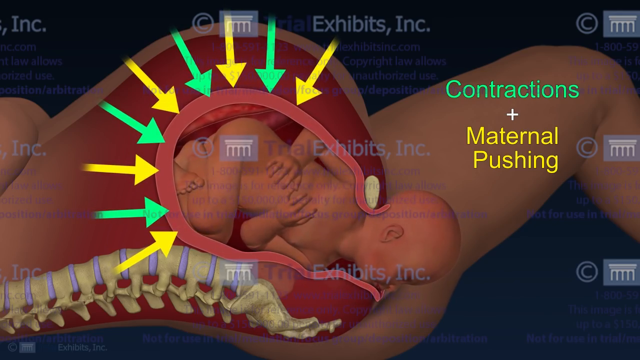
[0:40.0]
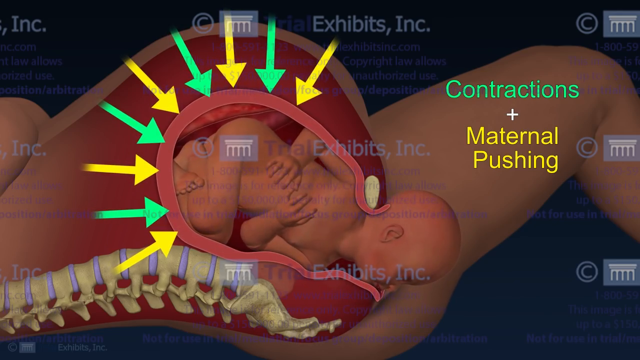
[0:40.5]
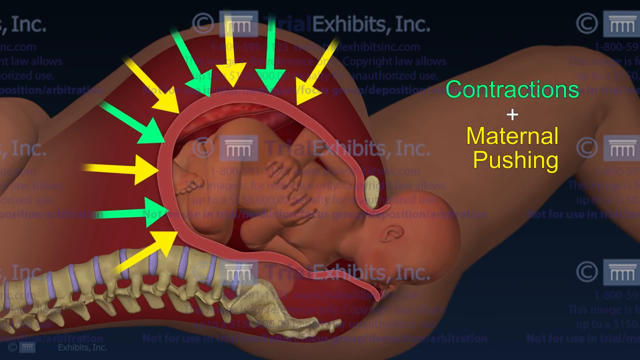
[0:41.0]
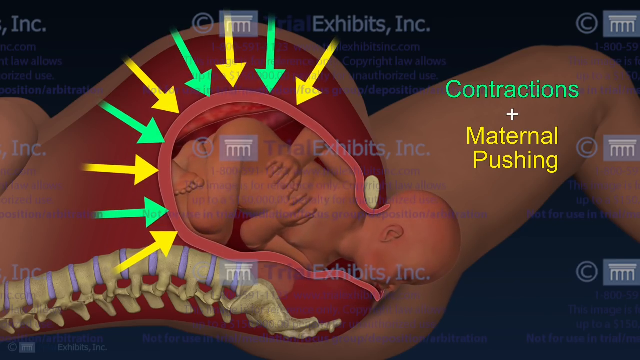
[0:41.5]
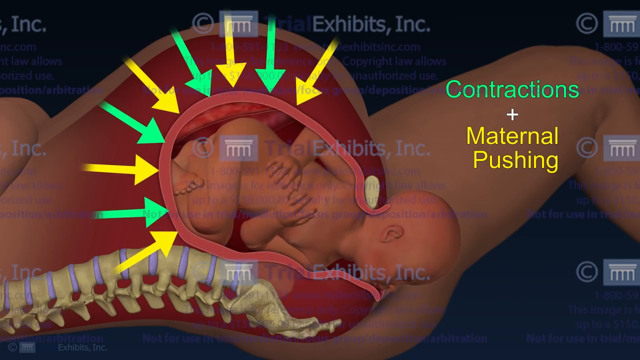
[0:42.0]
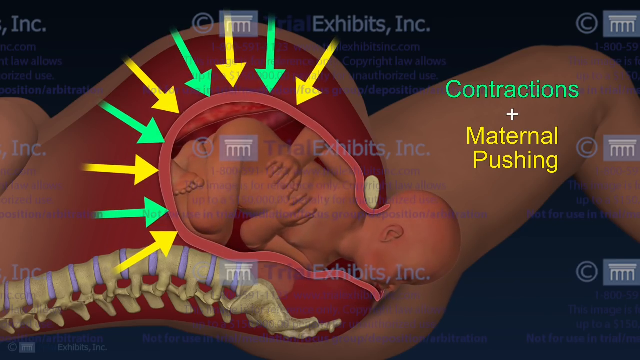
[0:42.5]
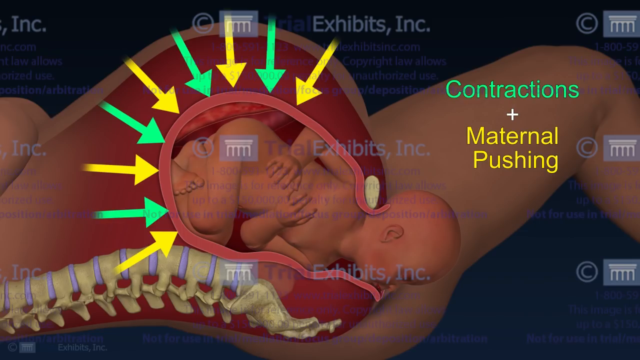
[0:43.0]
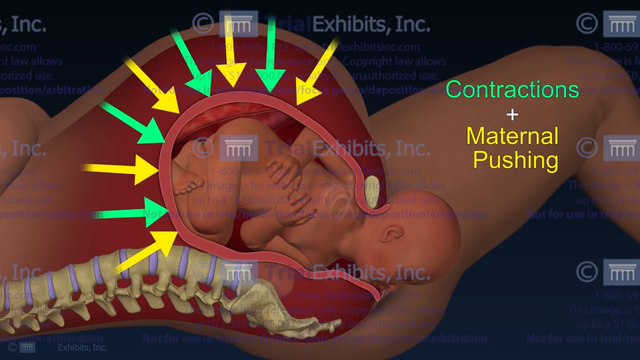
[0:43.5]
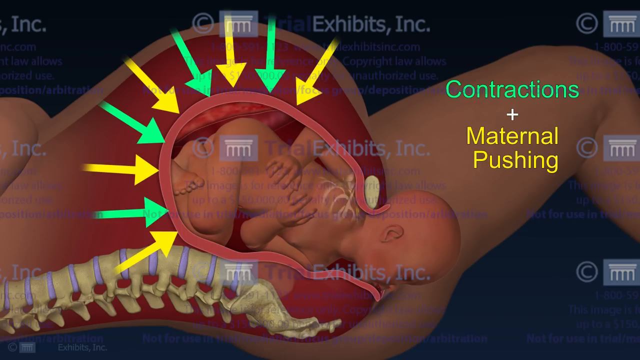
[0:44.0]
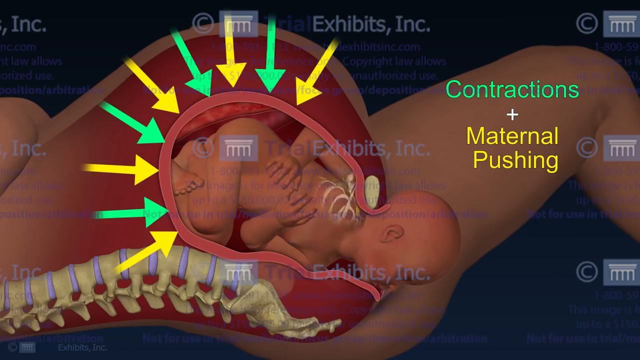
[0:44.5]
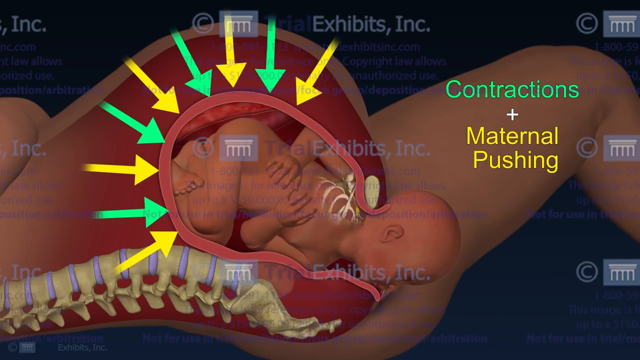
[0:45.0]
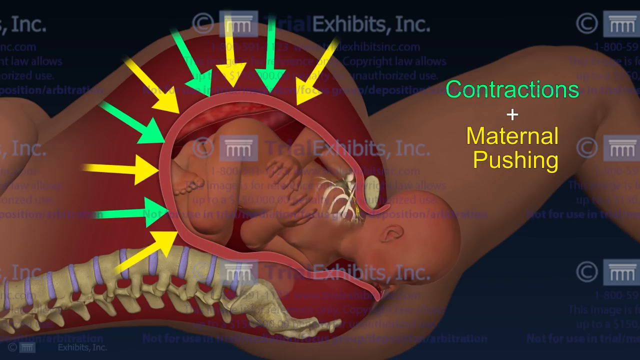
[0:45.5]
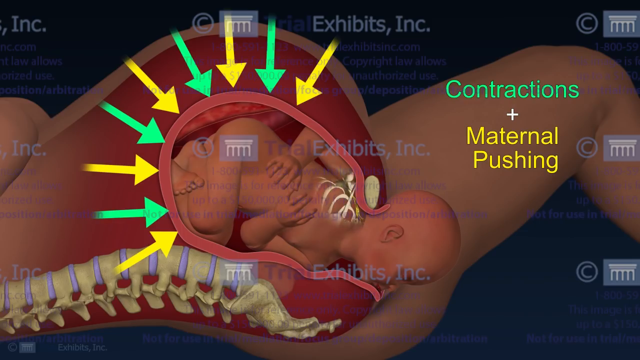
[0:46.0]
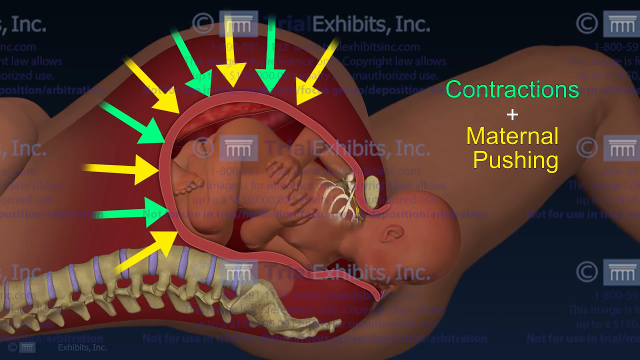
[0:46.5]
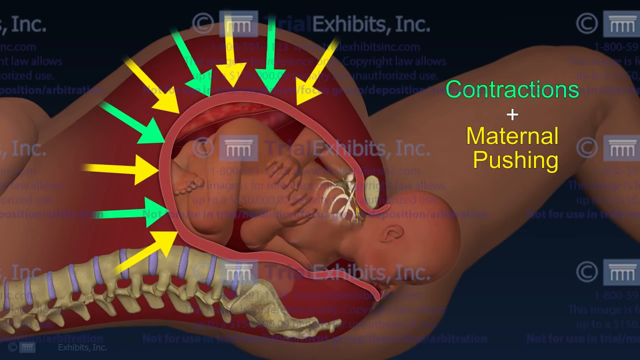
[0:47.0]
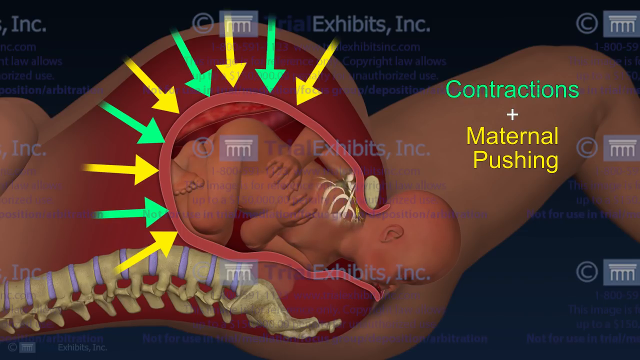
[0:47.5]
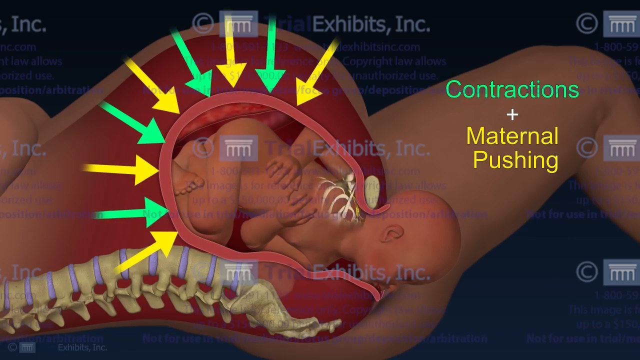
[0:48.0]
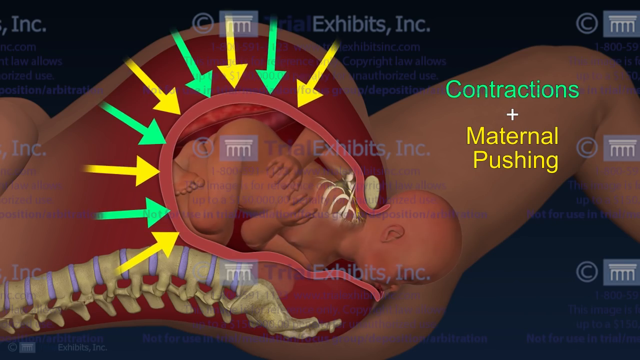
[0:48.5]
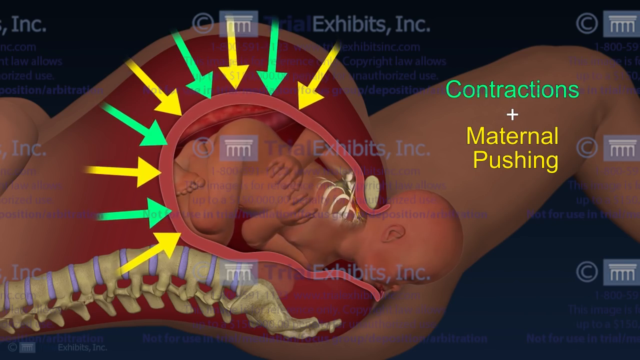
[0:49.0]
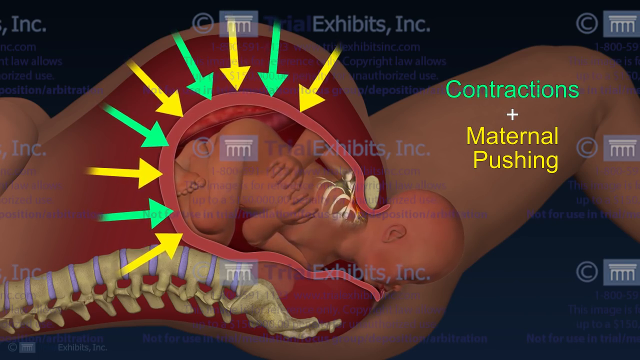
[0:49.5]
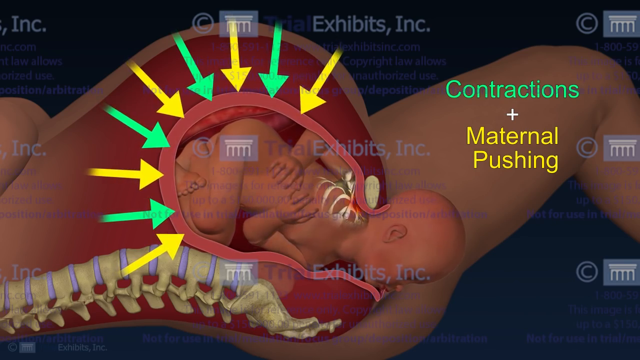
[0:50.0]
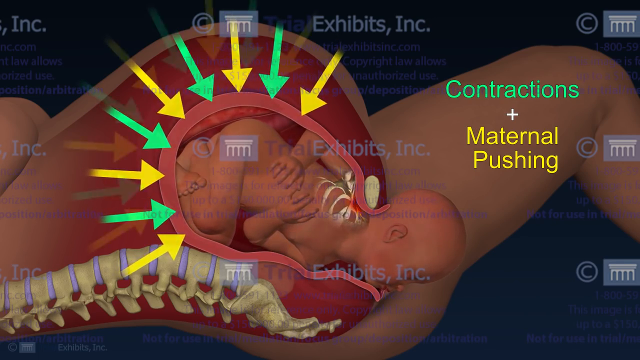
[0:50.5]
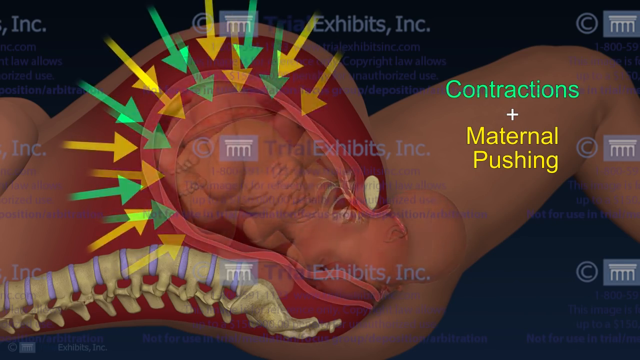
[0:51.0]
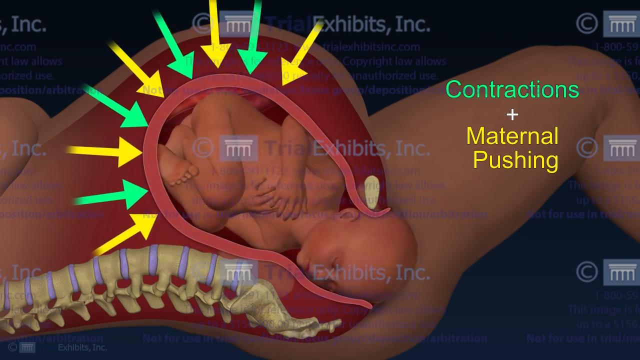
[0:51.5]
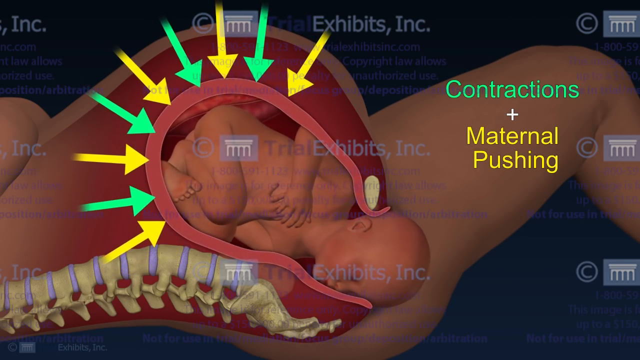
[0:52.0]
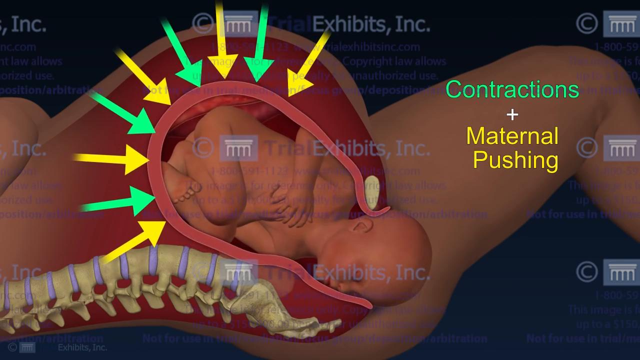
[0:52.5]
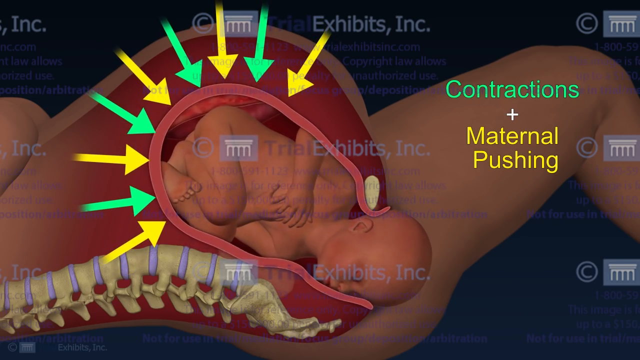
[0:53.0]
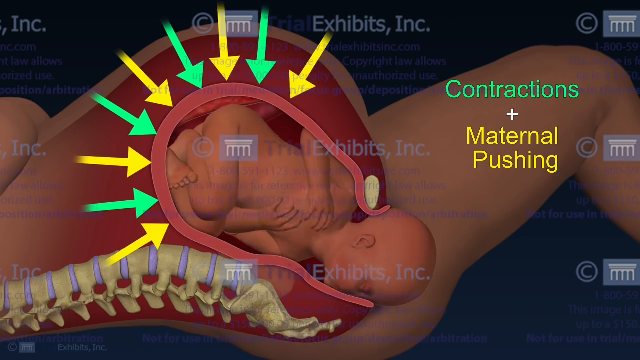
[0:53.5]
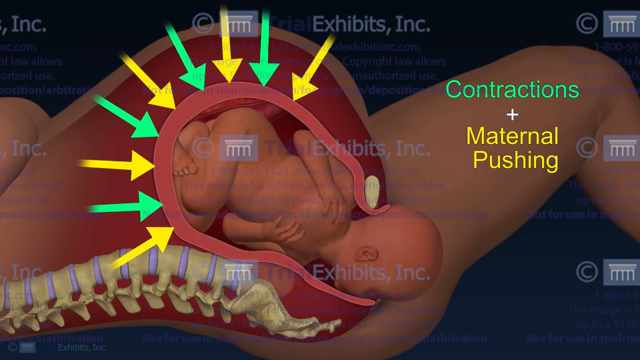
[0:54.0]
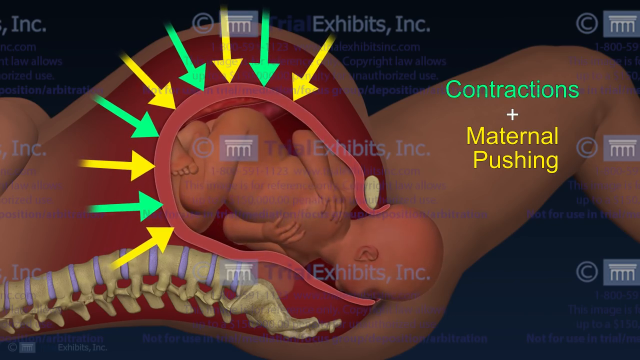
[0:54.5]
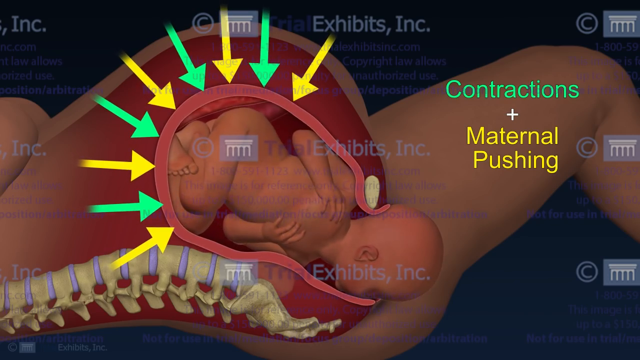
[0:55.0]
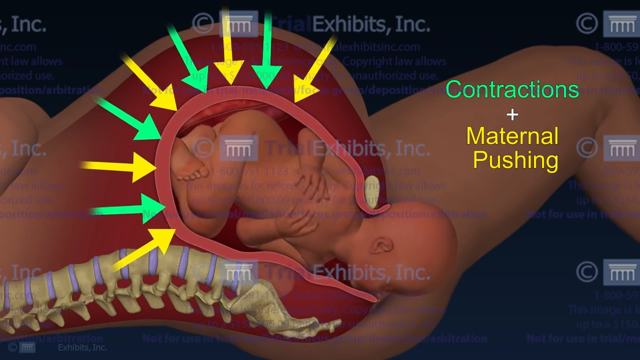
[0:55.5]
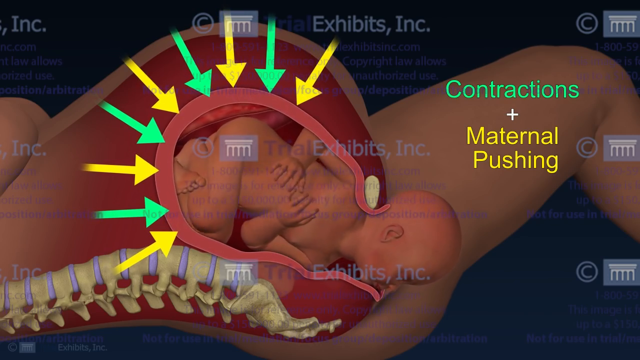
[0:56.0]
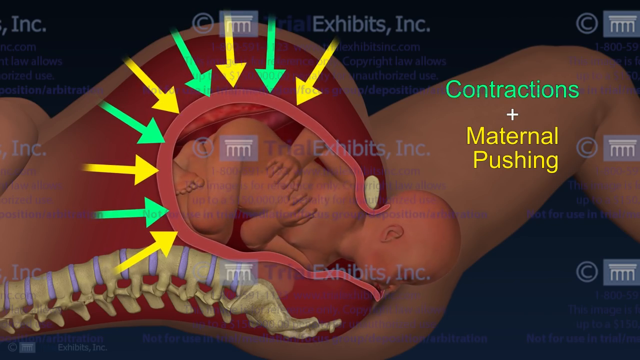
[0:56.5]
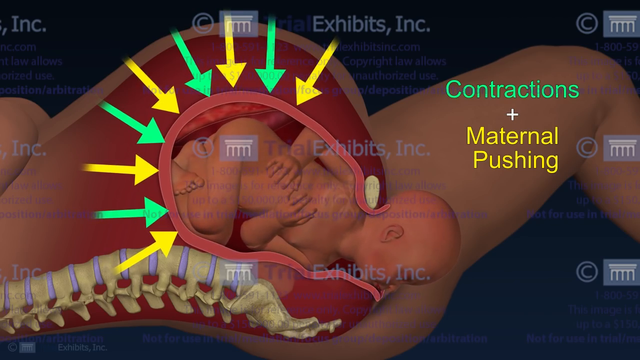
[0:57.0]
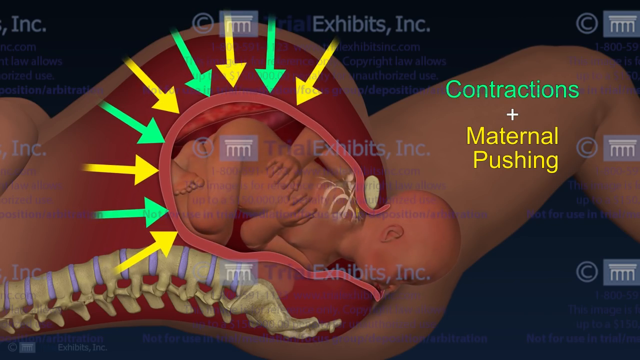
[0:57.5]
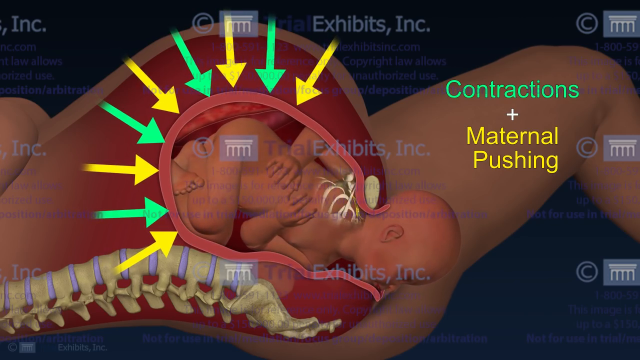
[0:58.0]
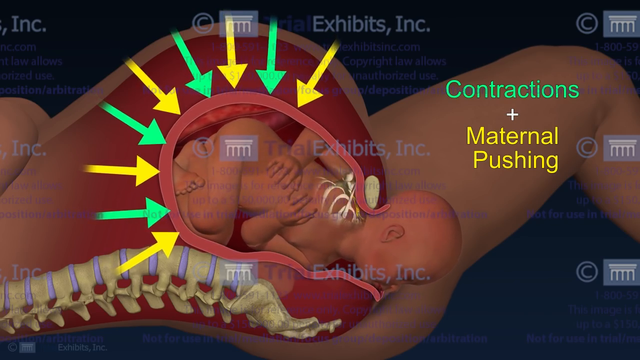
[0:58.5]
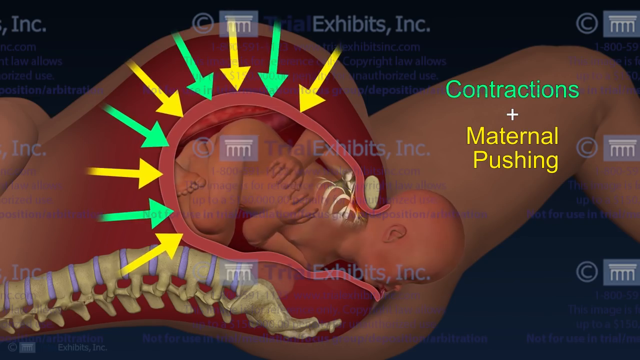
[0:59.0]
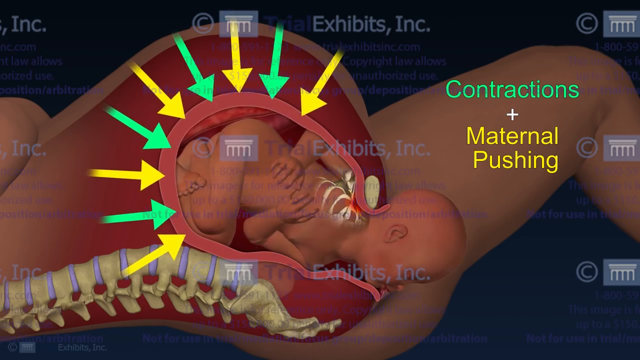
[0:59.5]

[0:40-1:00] The animation stays on the side view of the baby inside the mother, with the text "contraction plus maternal pushing"; the contraction part is written over the mother's legs. Her knee is visible, but not her calf or feet; her knees point up a little, so she probably has her feet planted as she rests on the ground. There is not much motion. A small red border surrounds the protected area of the fetus, and alternating yellow and green arrows run all around it, starting on the left side and ending at the baby's lower back. Watermarks of exhibit ink with a copyright appear, along with the emblem of the simple pillared building. The baby is pushed down further, which makes its head rotate: it starts to face the viewer, and as it is pushed down more, the head turns to face down. It moves and twists a little more, and some of the arrows show something almost like compression at the bottom, forcing it out. At the end, the spine is highlighted from the neck down to the mid-back.